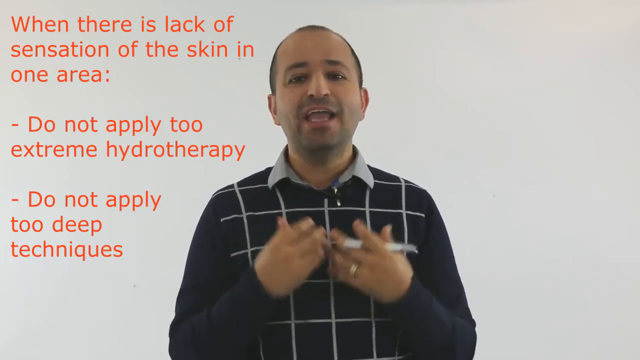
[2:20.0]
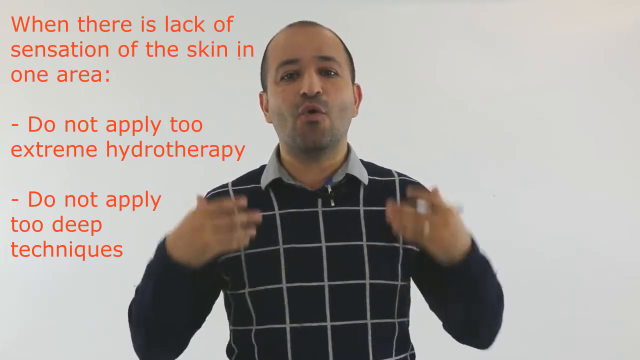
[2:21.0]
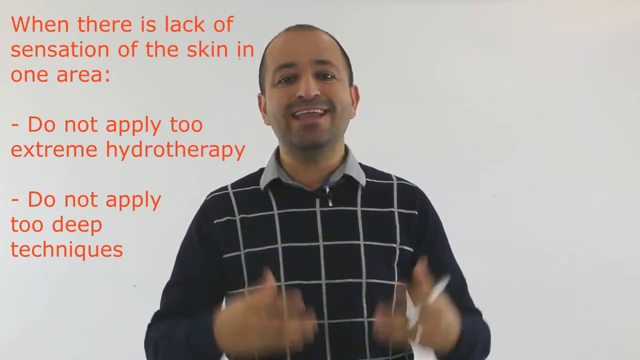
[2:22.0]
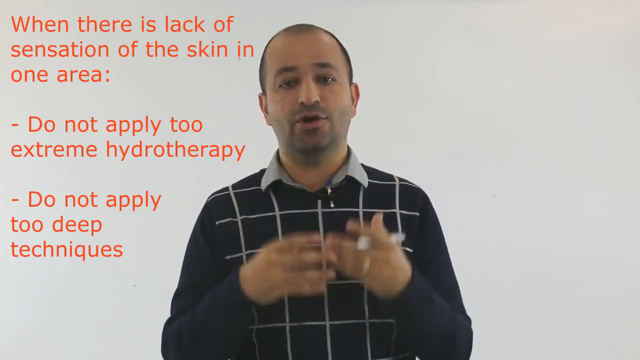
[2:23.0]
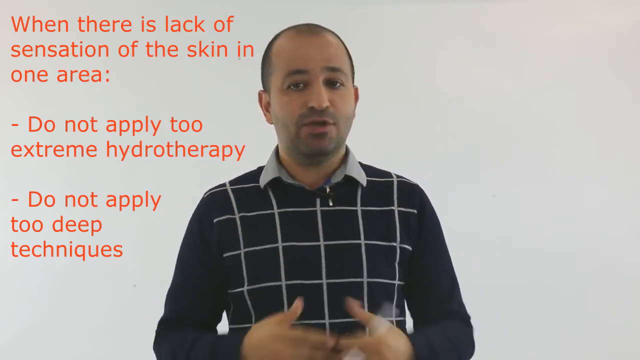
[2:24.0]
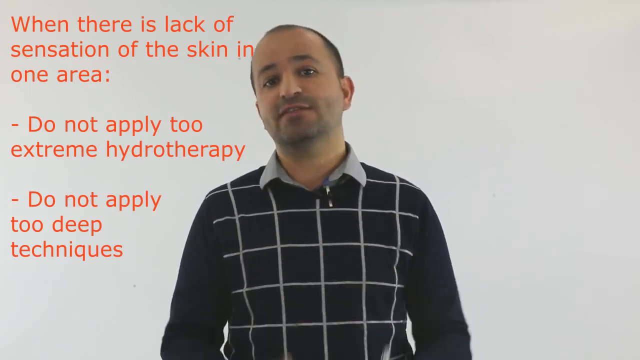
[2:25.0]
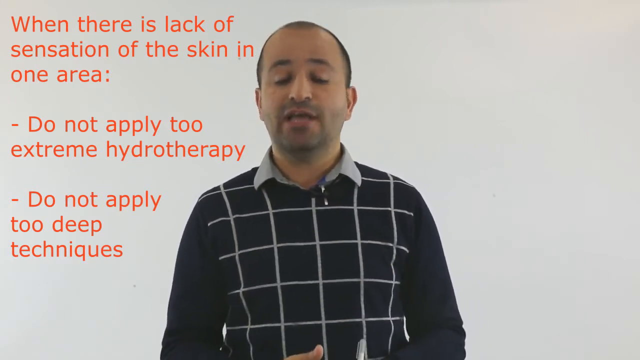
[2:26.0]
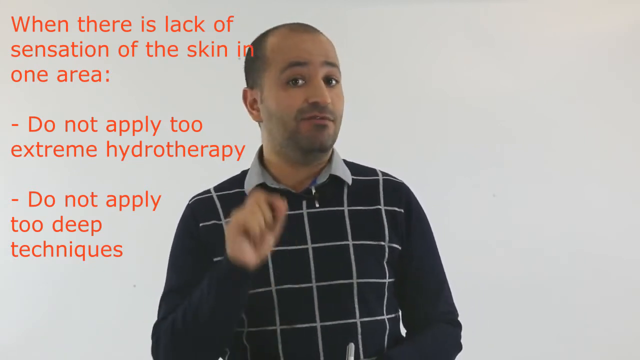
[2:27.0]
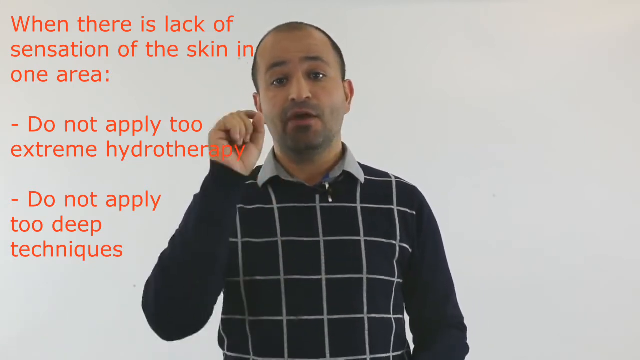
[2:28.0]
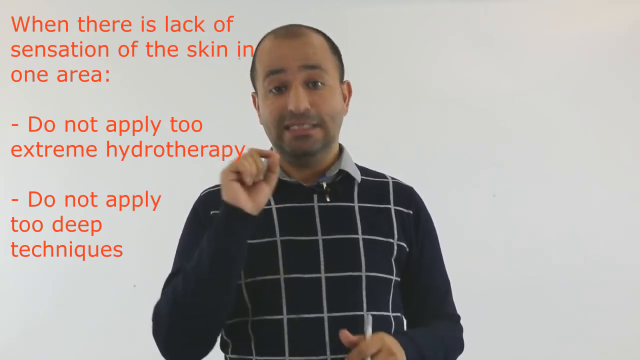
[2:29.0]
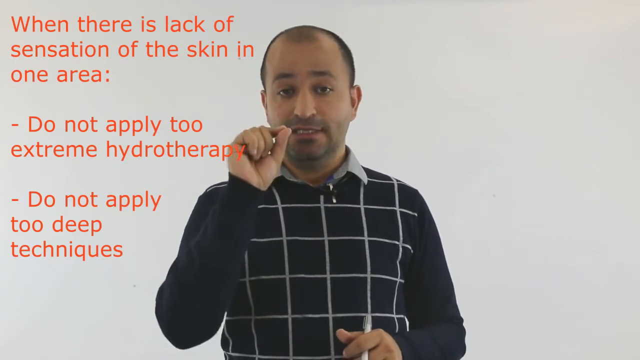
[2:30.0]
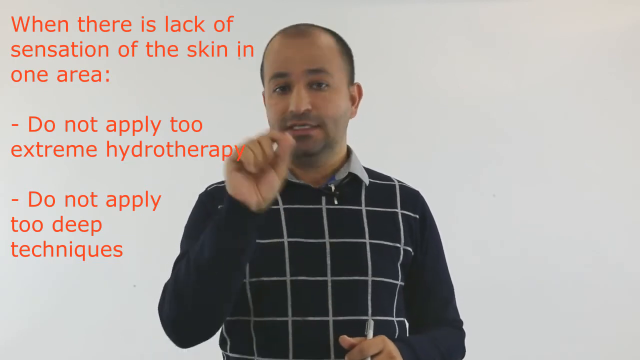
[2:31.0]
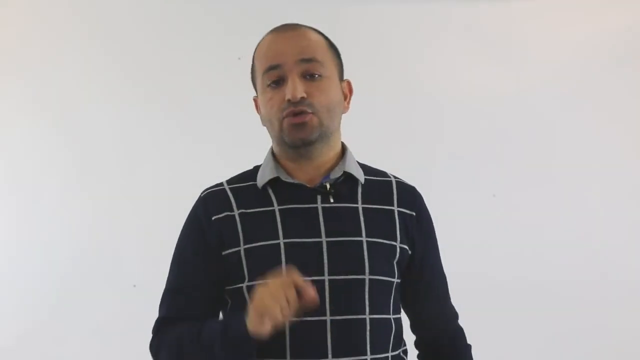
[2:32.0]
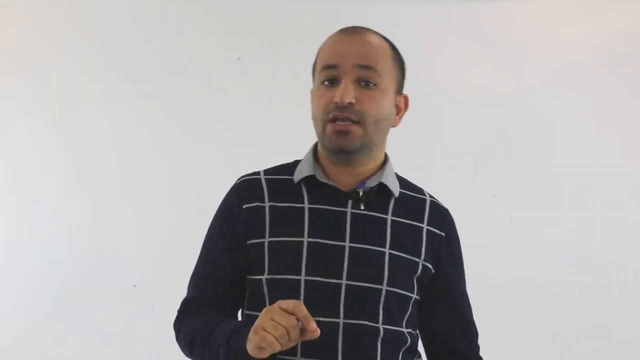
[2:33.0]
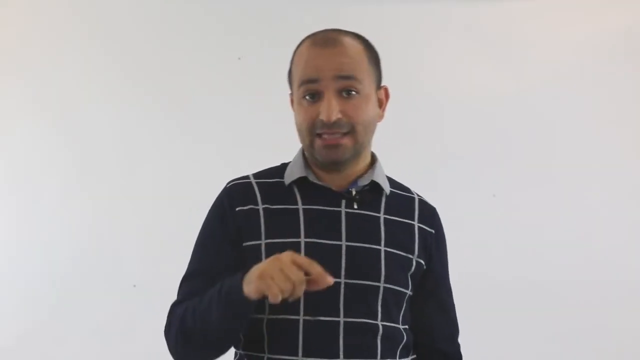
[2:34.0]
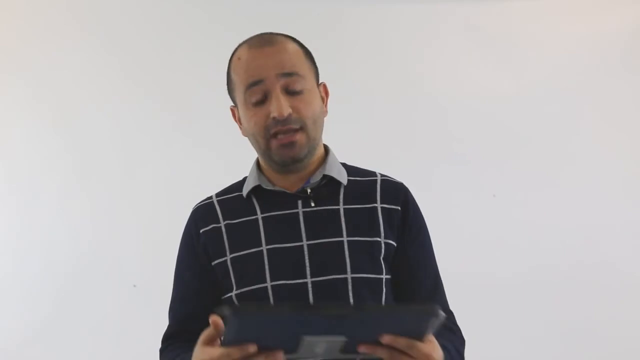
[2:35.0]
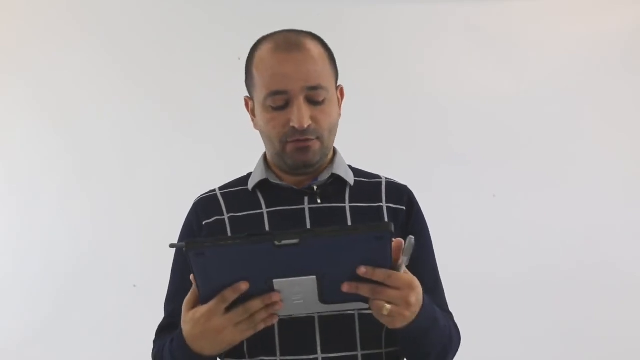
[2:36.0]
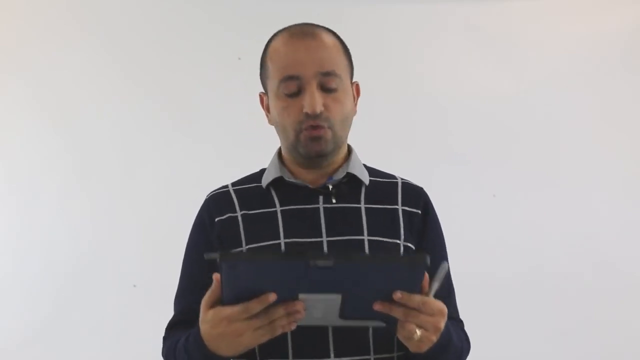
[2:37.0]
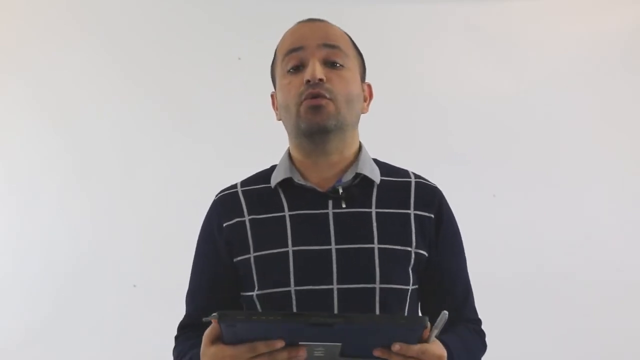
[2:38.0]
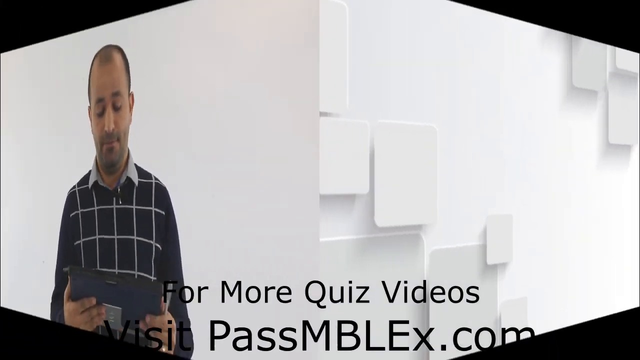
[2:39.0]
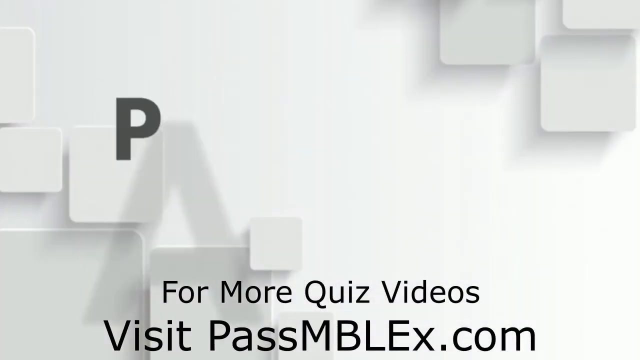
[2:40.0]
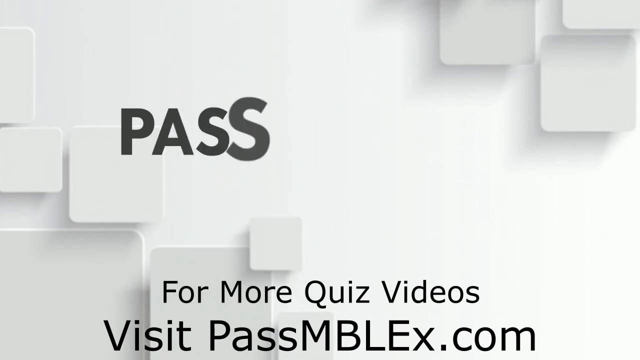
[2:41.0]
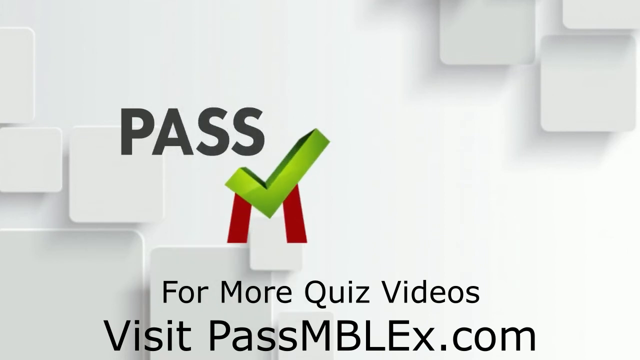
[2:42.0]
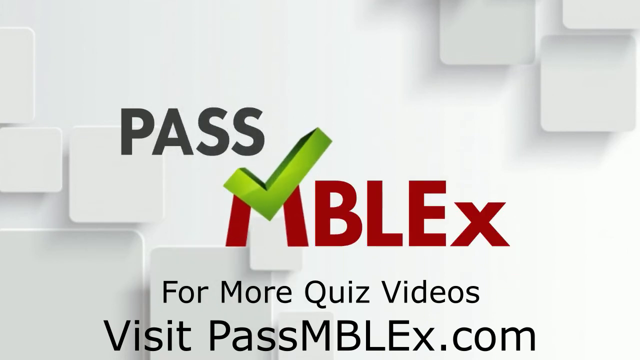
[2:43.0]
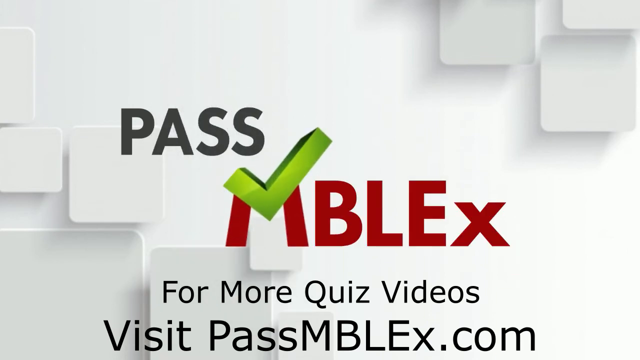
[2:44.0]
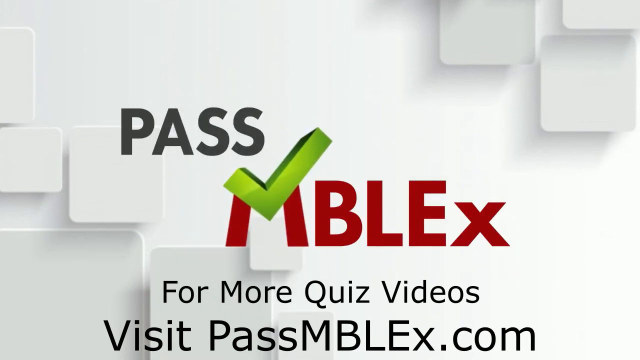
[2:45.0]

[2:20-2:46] The Middle Eastern man looks at the viewer, talking very passionately with his hands, and looks like he is lecturing on massage therapy. He wears a black sweater over a gray button-up shirt, has a wedding ring on his left hand, and holds a pen in his left hand. He is balding with really short black hair, wears no glasses, and stands in front of a white background. Text on the left side of the screen reads "when there is a lack of sensation on the skin in one area, do not apply too extreme hydrotherapy. Do not apply too deep technique." The screen then transitions to kind of an outro that reads "pass MBLEX" and then "for more quiz videos, visit passmblex.com."